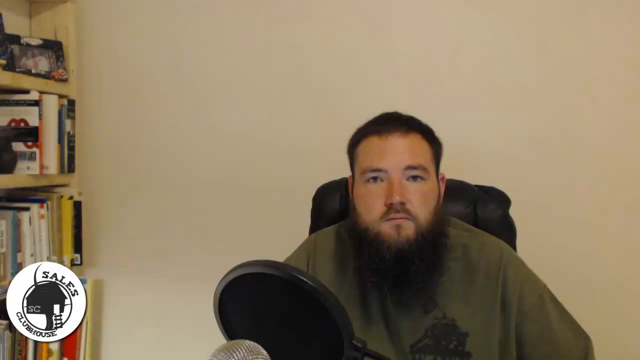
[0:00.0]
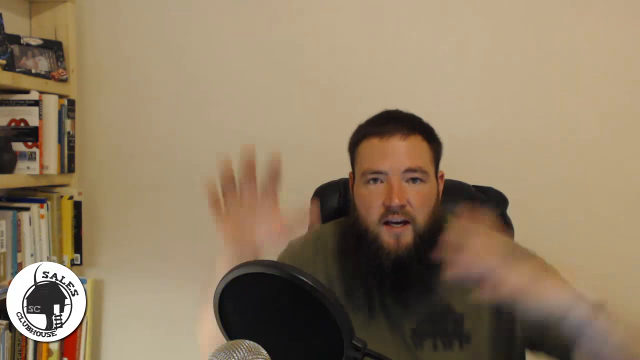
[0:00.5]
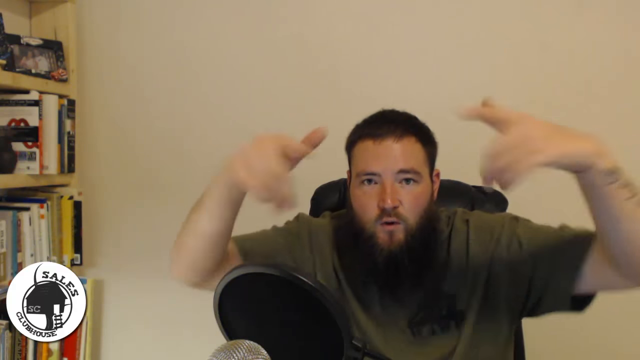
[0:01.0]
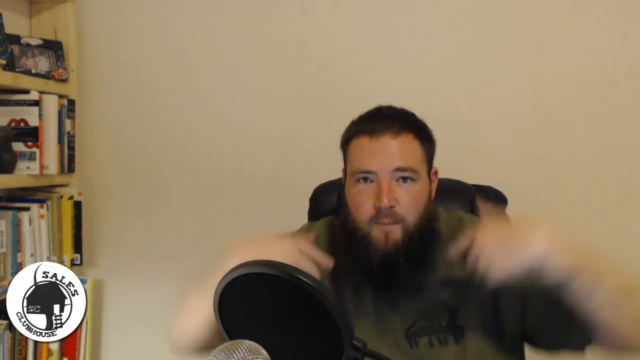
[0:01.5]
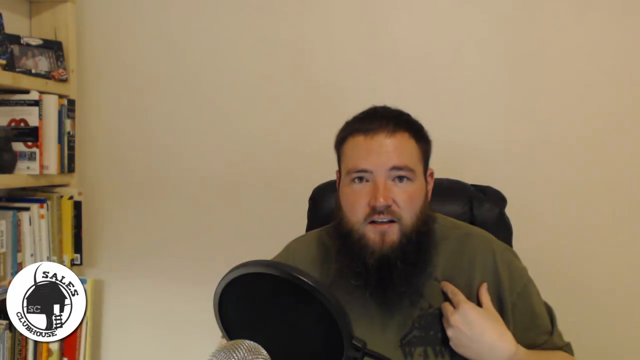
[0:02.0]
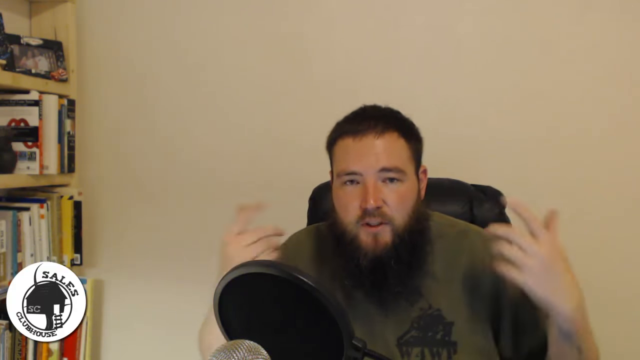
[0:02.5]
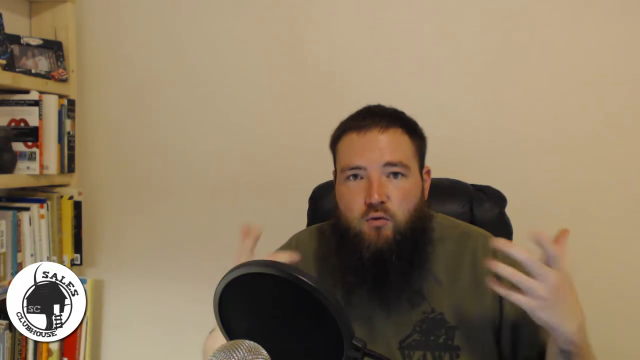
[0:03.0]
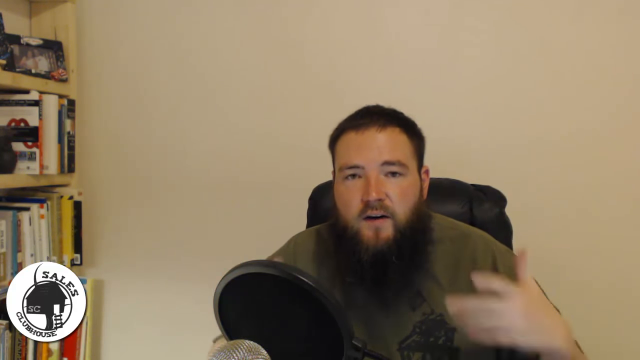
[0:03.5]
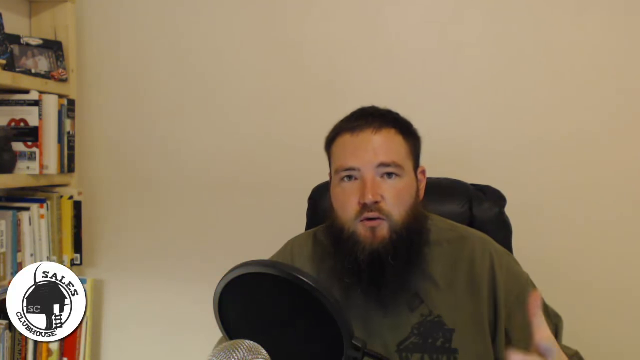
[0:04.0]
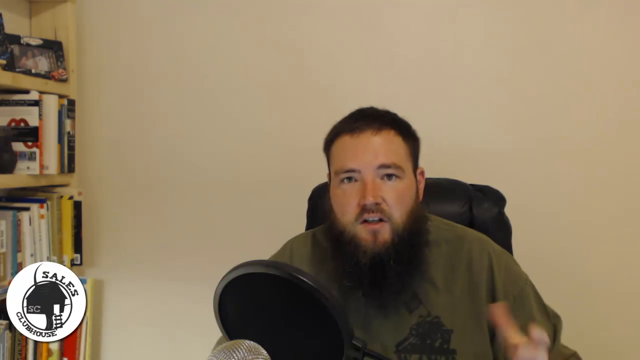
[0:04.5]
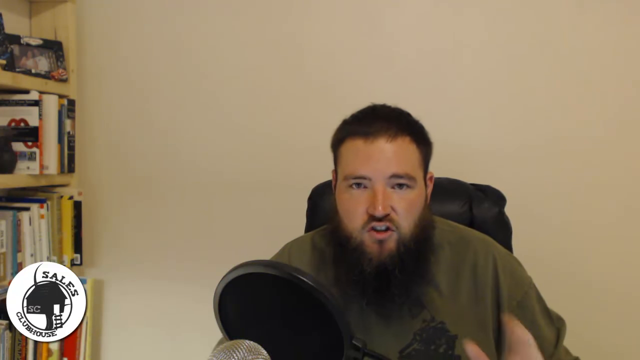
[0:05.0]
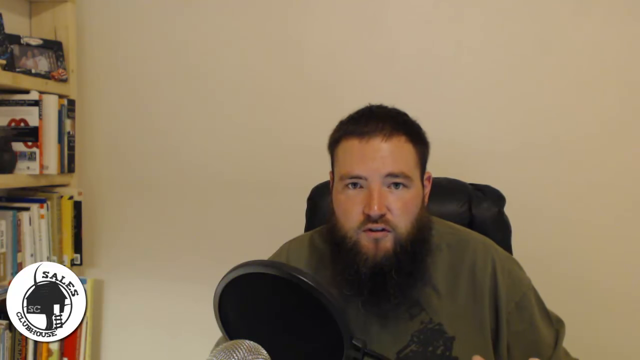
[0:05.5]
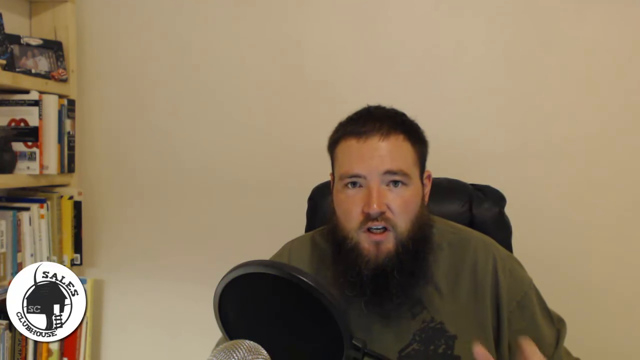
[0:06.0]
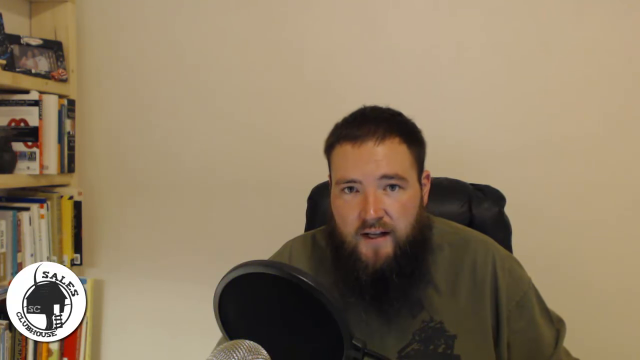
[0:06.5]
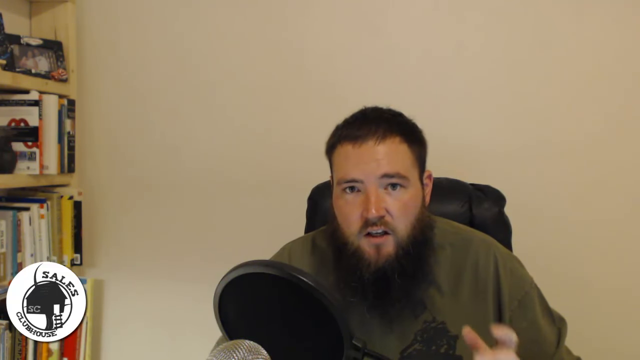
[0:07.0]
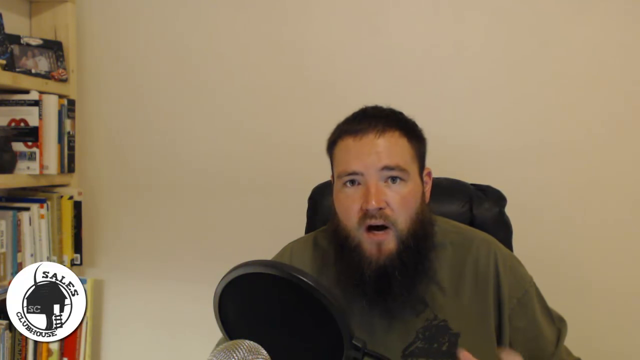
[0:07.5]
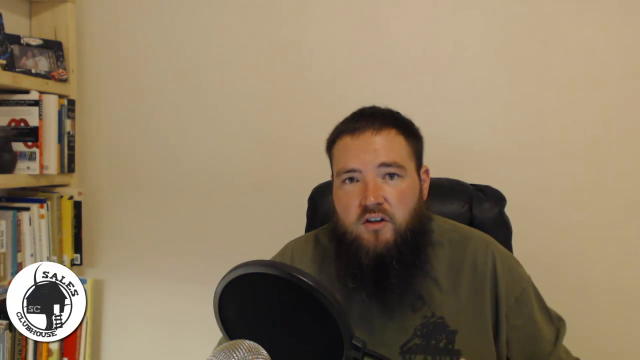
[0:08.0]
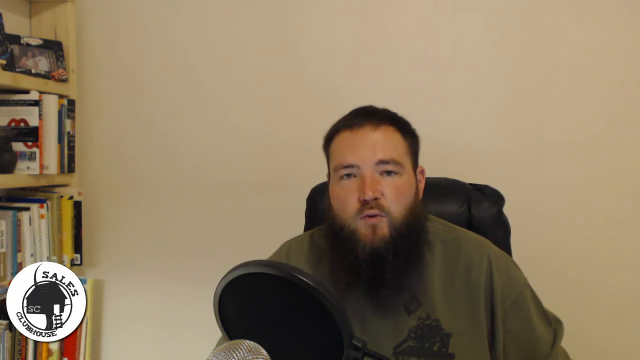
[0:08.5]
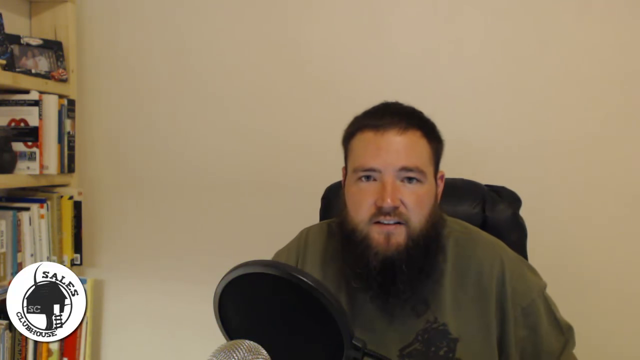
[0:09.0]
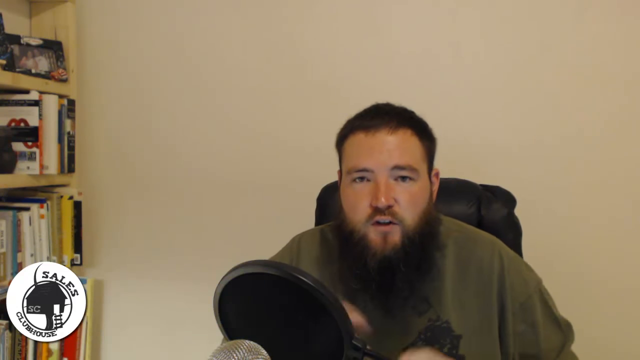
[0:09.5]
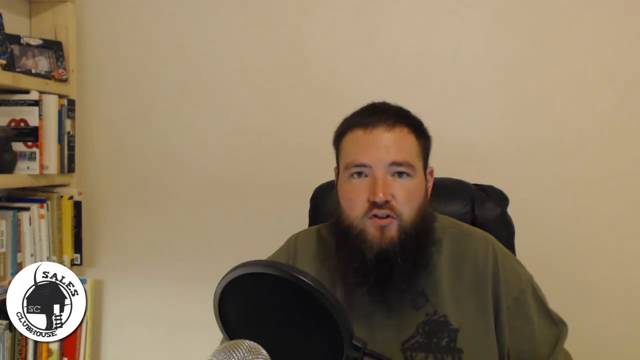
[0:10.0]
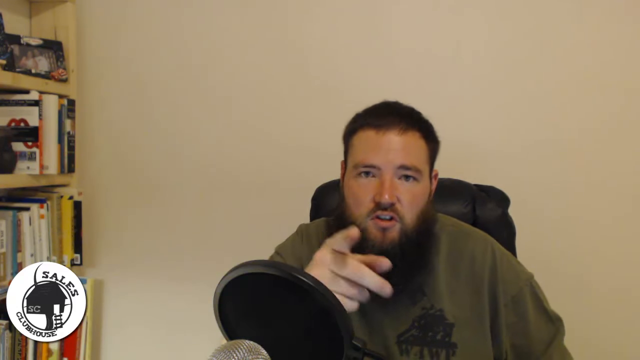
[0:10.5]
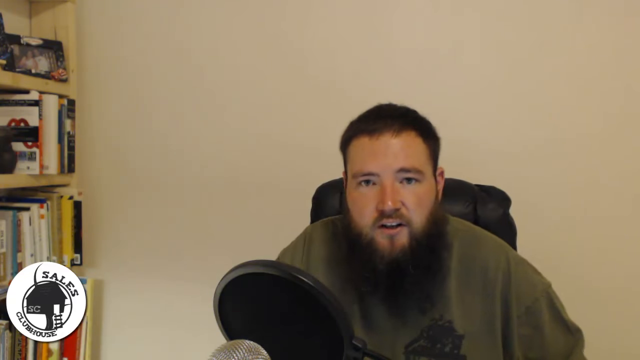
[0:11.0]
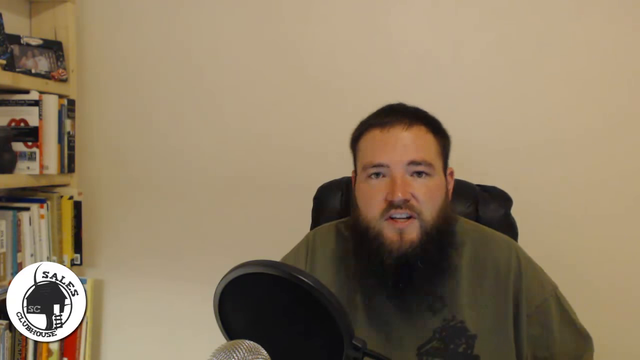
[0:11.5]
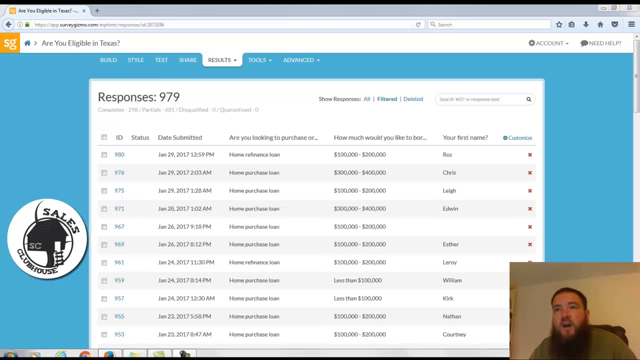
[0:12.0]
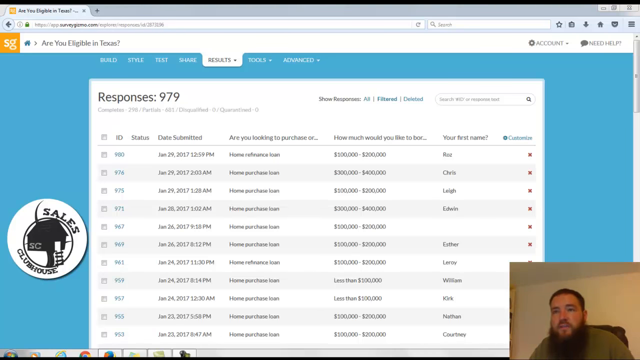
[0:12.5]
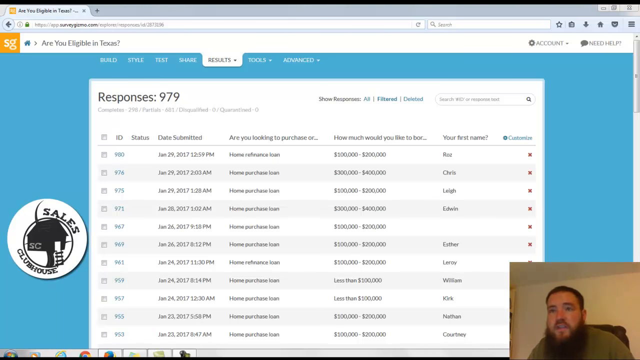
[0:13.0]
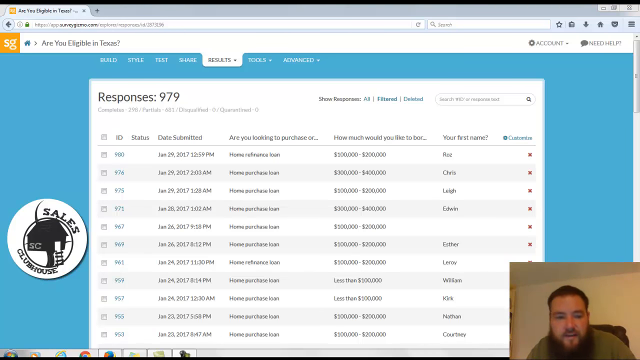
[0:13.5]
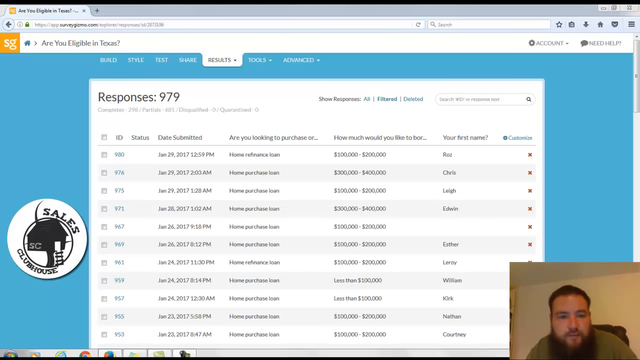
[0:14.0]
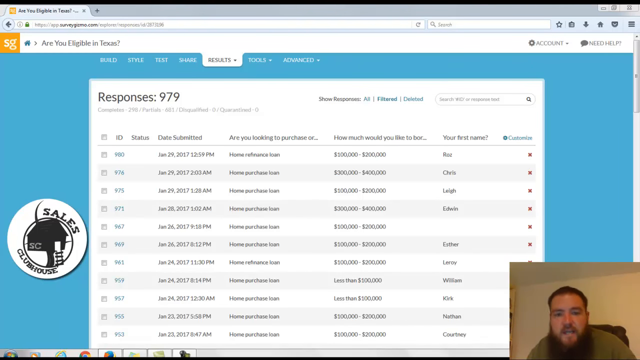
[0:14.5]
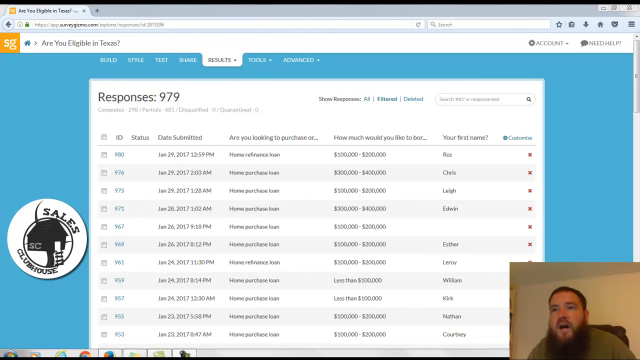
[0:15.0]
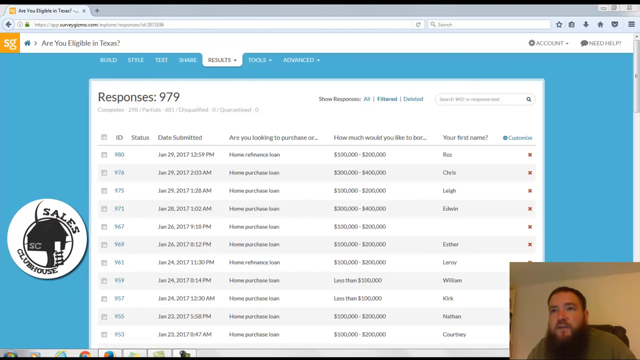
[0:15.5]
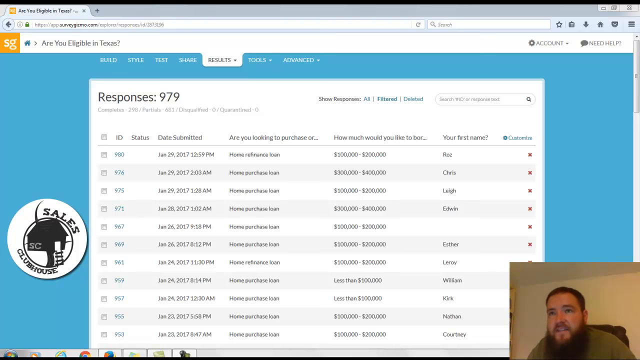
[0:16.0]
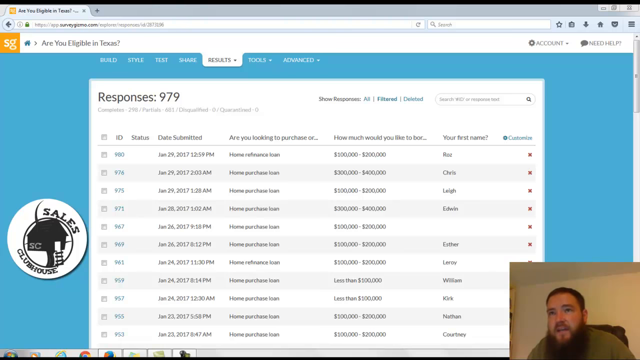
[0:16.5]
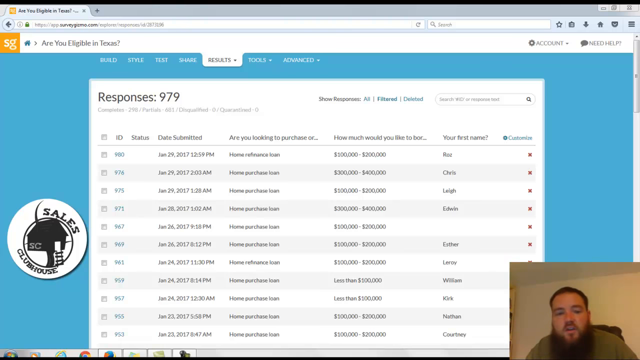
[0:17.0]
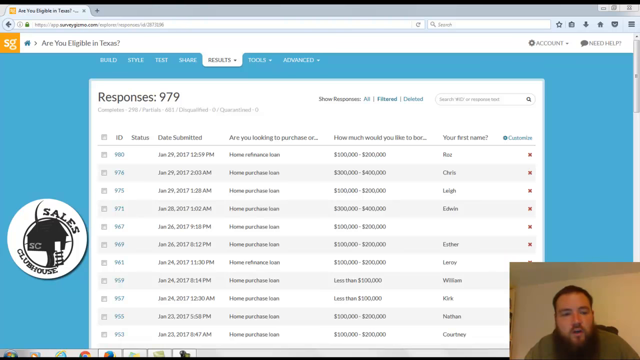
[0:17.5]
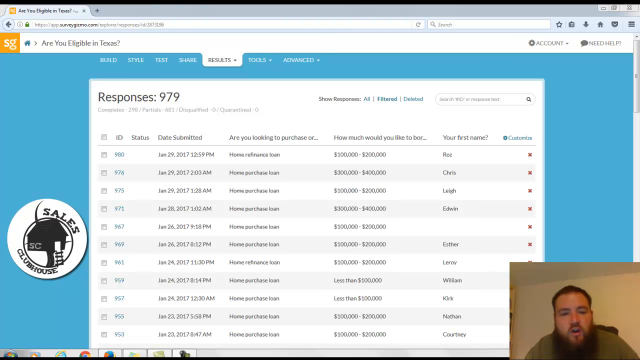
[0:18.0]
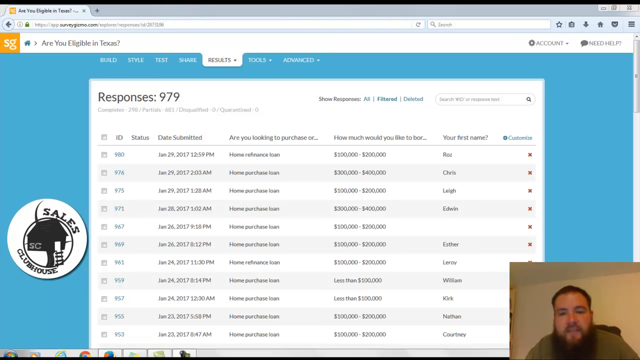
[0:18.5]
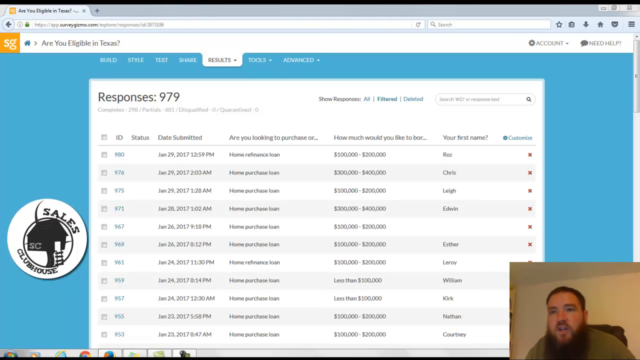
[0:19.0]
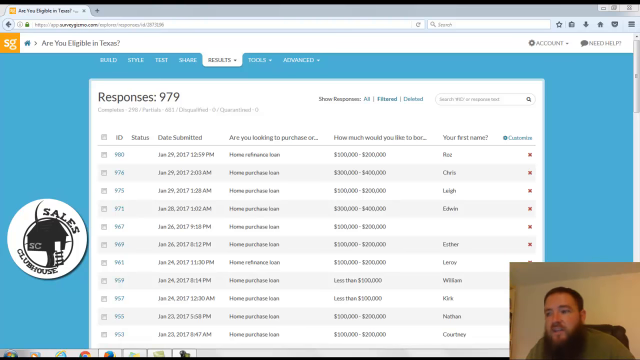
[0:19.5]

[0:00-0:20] A young Caucasian man with very short hair, a very large black beard and a small goat-like mustache sits at the bottom right of the frame on what looks like a black computer chair. A bookshelf is on the left side of the frame, and in front of him is a microphone with a filter around it. At the bottom left is a white circle with black text reading "Sales Clubhouse" and a silhouette of a tree house with the white text "SC" on it. He wears a pale green T-shirt. As the video begins he raises both hands, palms downward, points his index fingers toward the viewer, talks, then points his index fingers toward himself and makes movements with his palms. He is very animated as he talks, waving his left hand in front of him and then pointing toward the viewer with his right hand. The video then transitions: his portrait moves to the bottom right in what looks like a streamer format, and most of the frame becomes a webpage in a web browser. The top left of the page appears to read "Are you eligible in Texas?", and below it appears to be a white table on a teal background, with "Responses 979" at the top. White header text across the top reads "Build", "Style", "Test", "Share", "Results", "Tools" and "Advanced", with "Results" currently selected. The table's column headers read "ID", "Status", "Date Submitted", "Are you looking to purchase or...", "How much would you like to borrow" and "your first name". The man keeps talking while the website is shown.